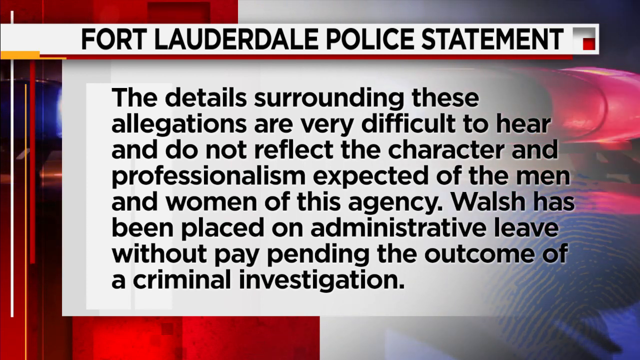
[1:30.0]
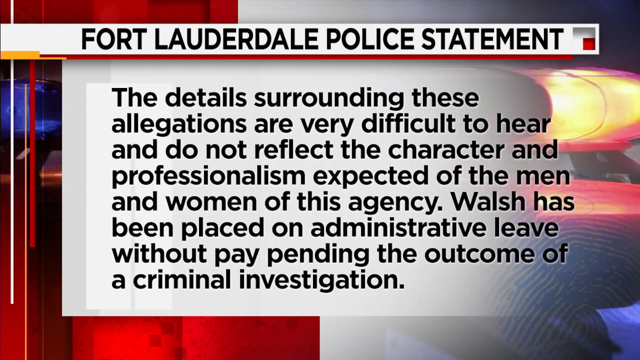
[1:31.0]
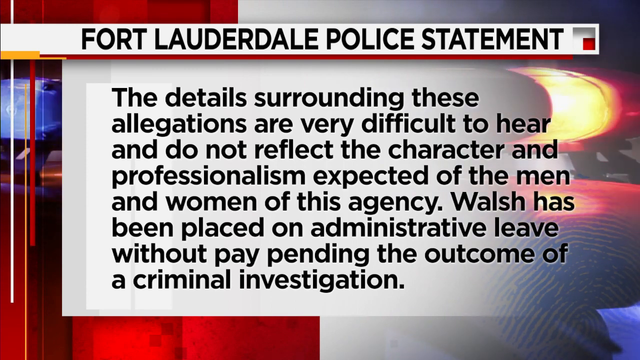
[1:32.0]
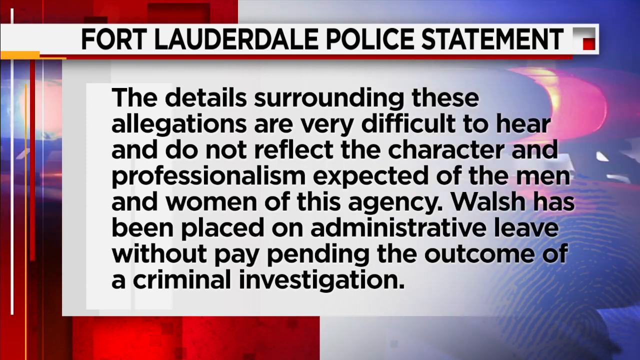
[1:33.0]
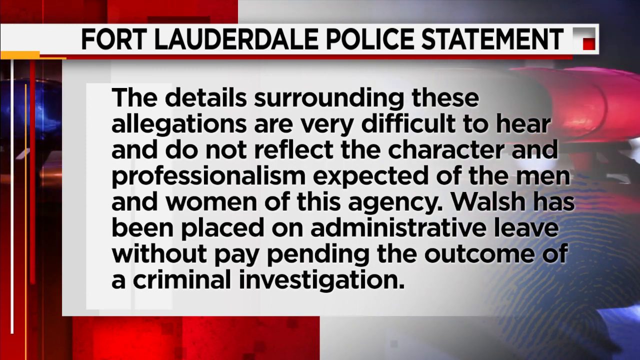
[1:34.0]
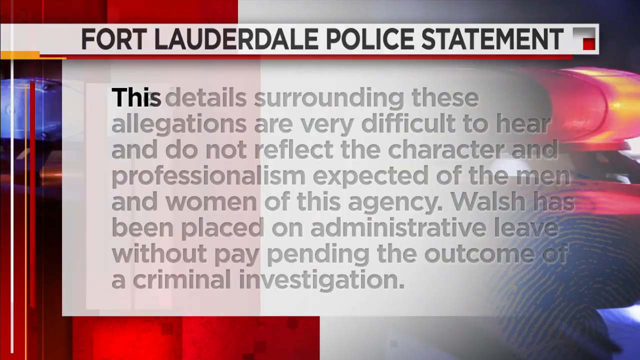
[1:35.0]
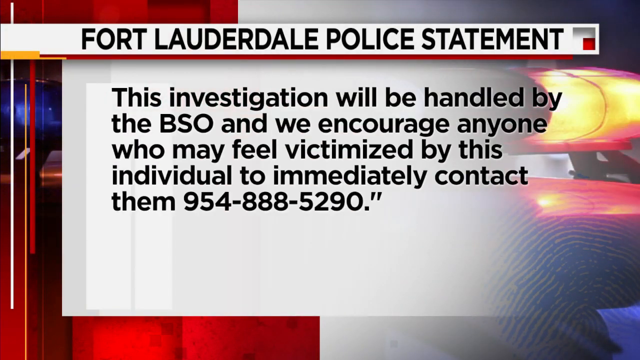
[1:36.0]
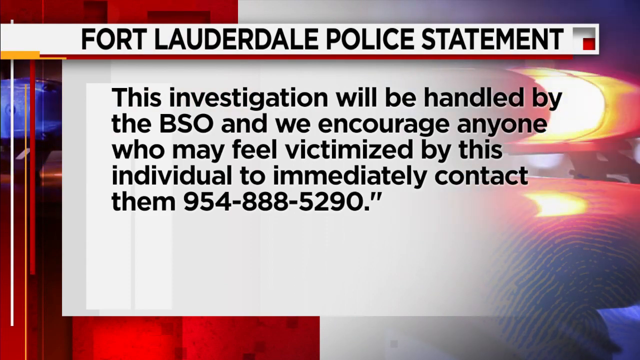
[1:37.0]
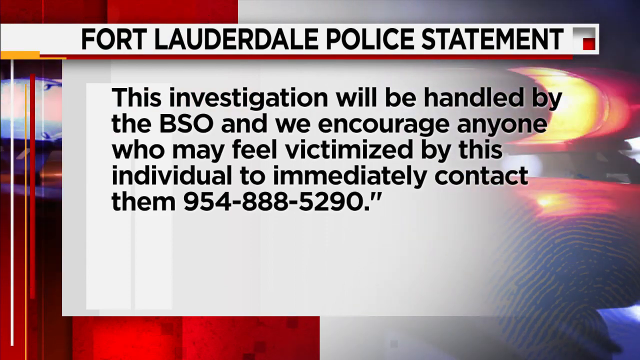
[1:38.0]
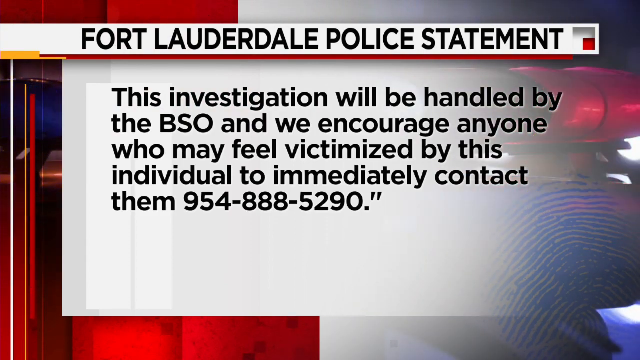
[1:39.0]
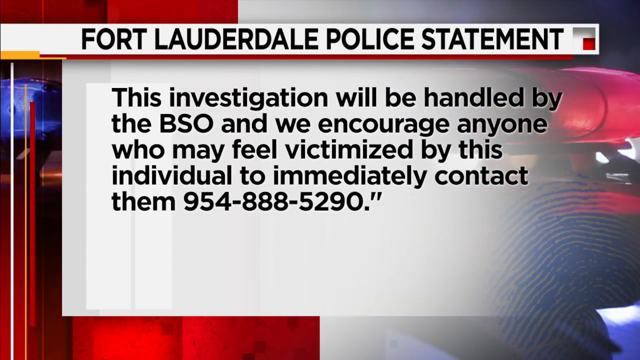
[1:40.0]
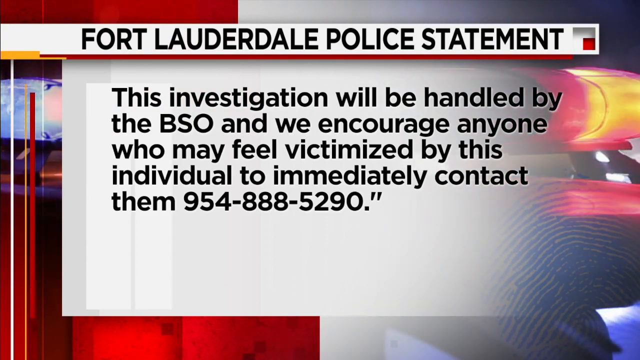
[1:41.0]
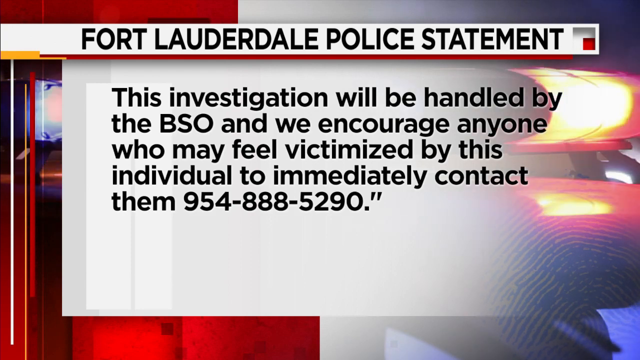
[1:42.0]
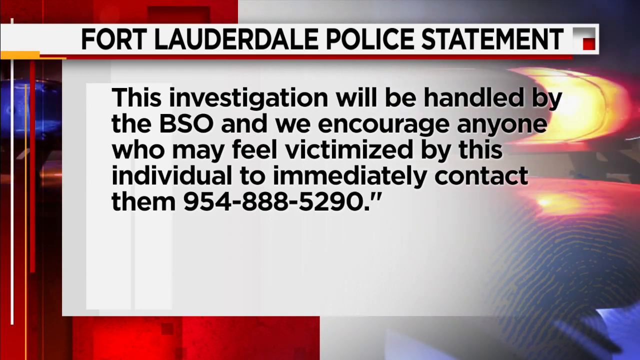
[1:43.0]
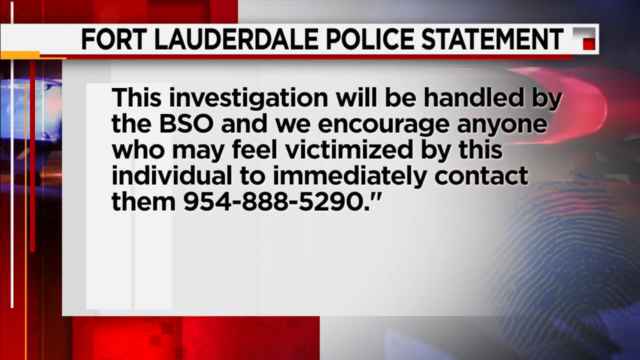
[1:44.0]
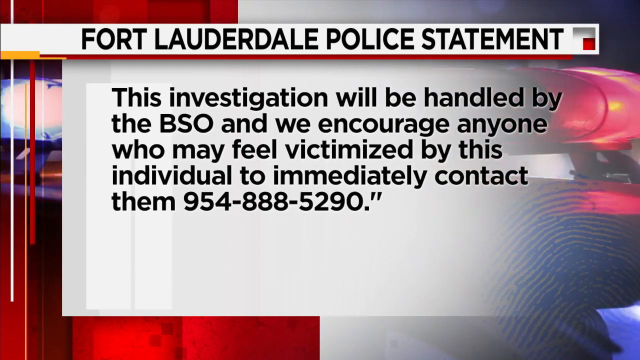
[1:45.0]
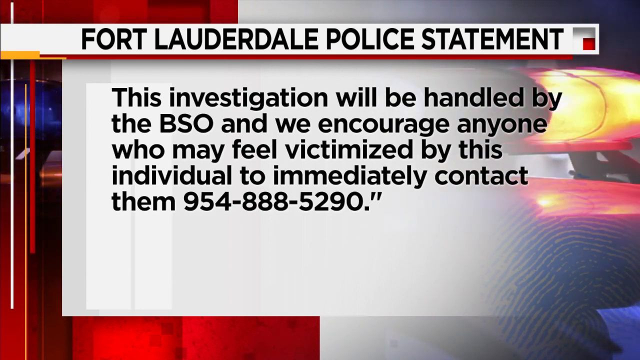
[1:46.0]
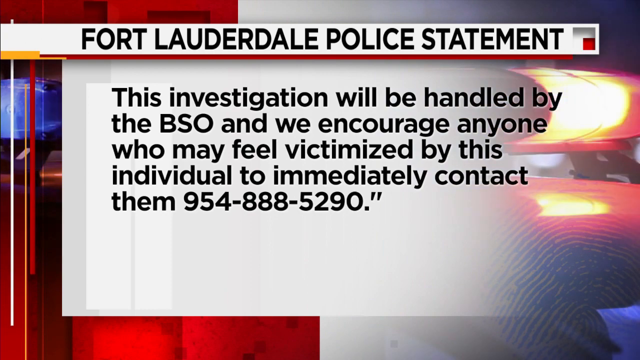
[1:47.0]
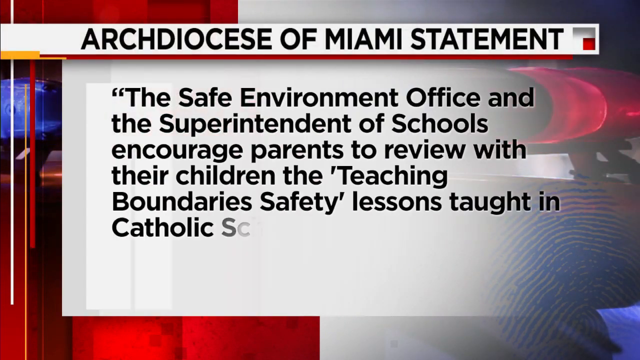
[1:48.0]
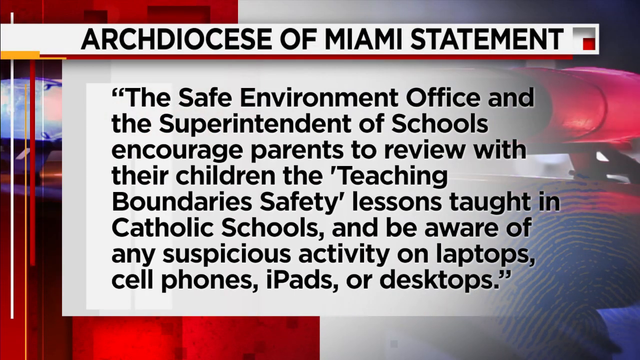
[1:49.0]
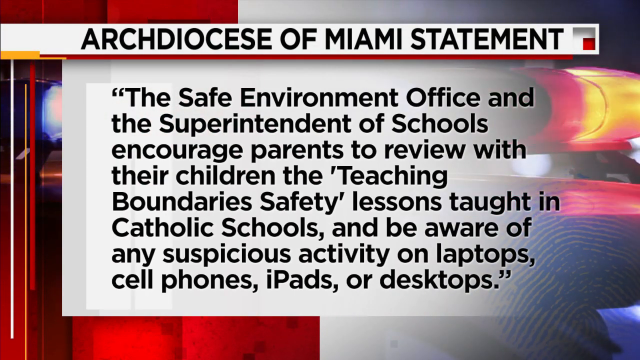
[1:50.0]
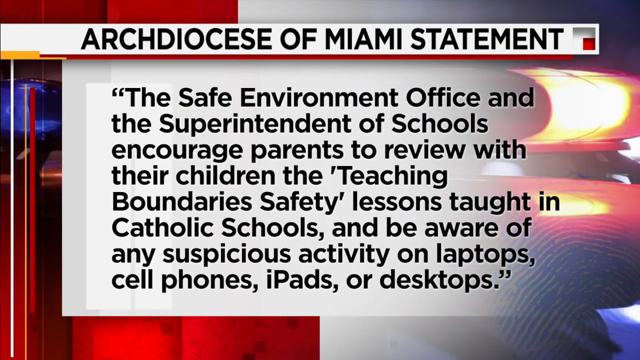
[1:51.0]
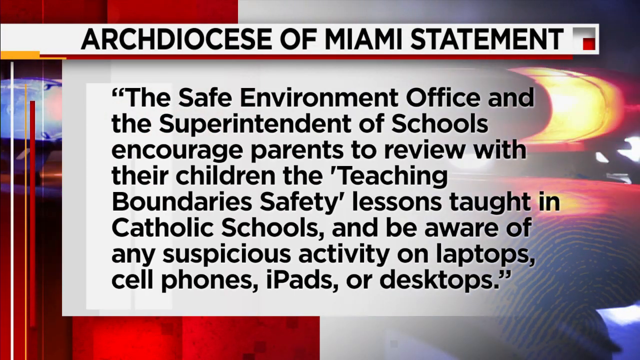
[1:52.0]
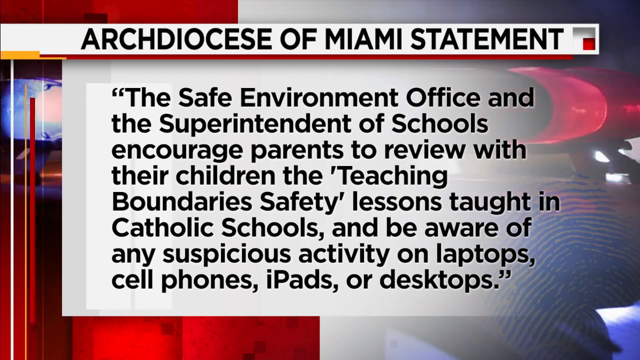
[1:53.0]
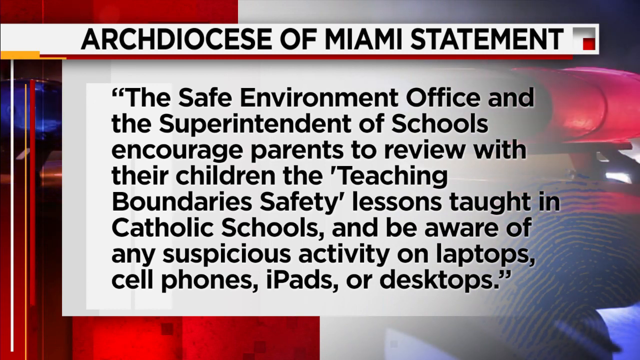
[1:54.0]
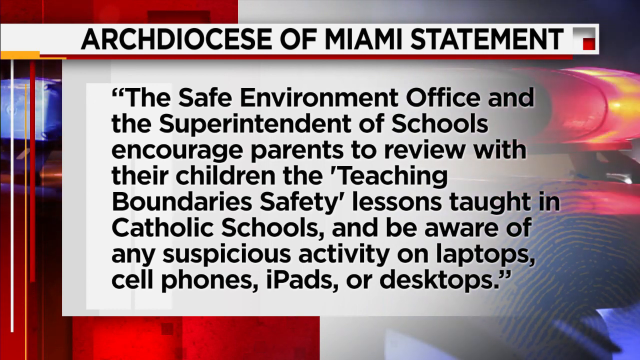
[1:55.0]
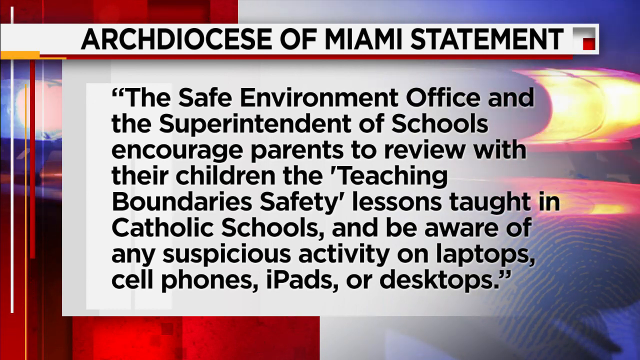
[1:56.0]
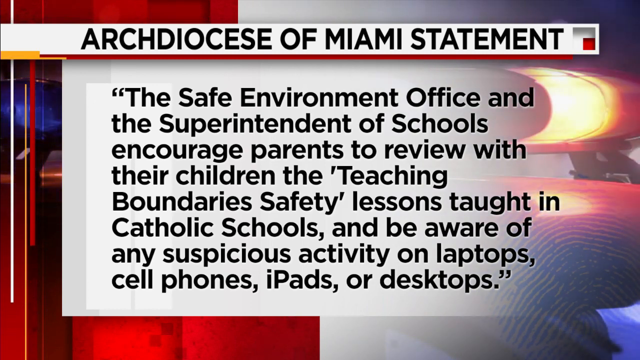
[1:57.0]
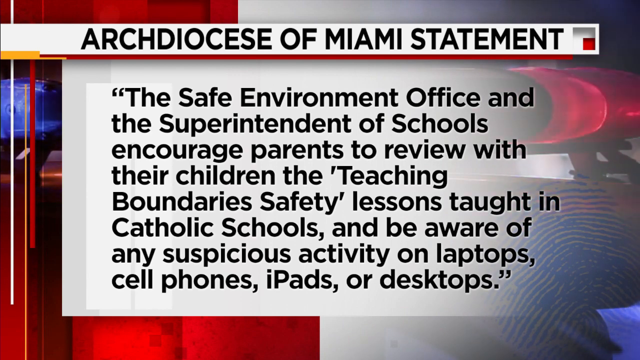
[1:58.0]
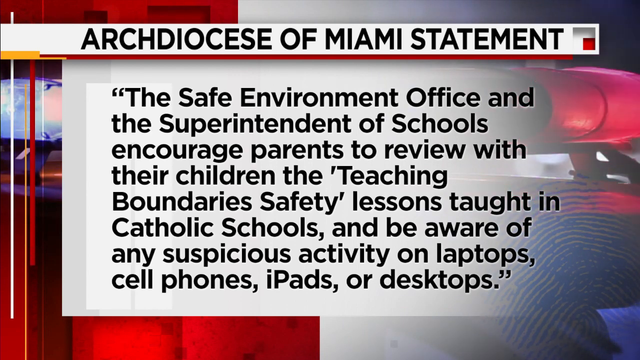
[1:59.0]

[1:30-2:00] Further messages from the Fort Lauderdale police follow. One states that "Walsh has been placed on administrative" leave pending "the outcome of a criminal investigation". Another says "This investigation will be handled by the BSO and we will encourage anyone who may feel victimized by this individual to immediately contact them at 954-888-5290."